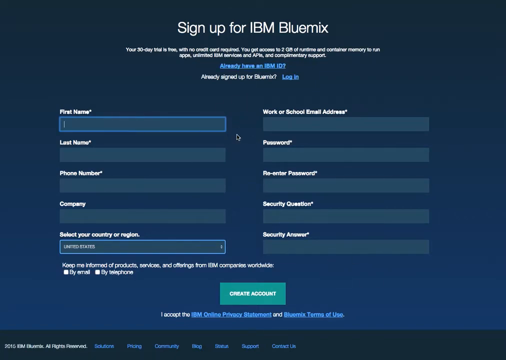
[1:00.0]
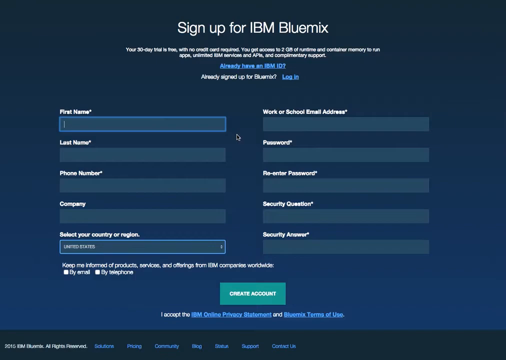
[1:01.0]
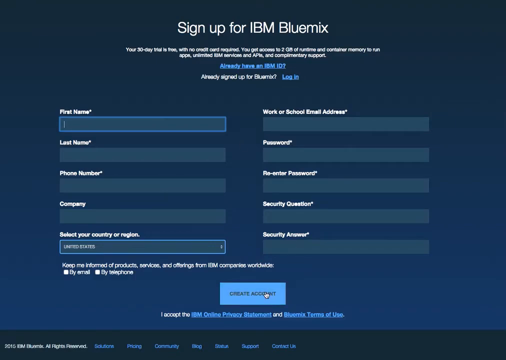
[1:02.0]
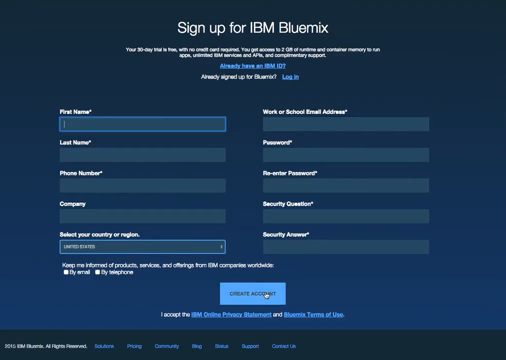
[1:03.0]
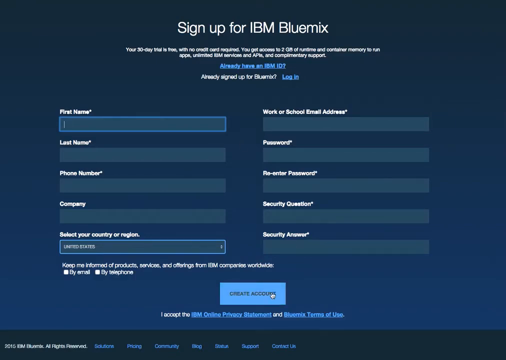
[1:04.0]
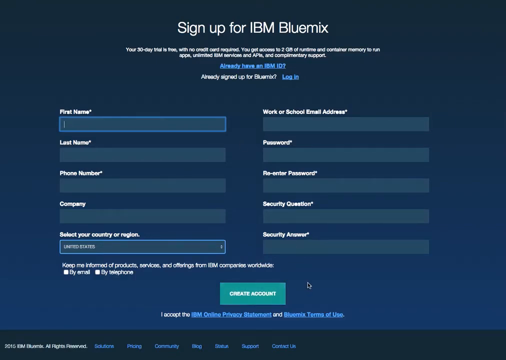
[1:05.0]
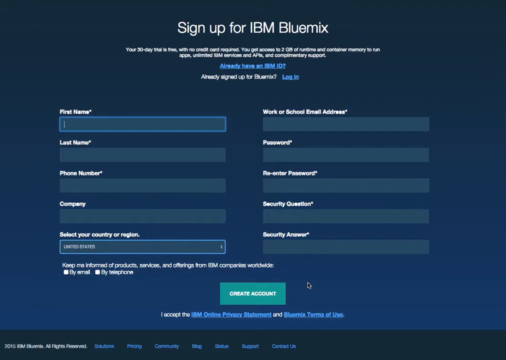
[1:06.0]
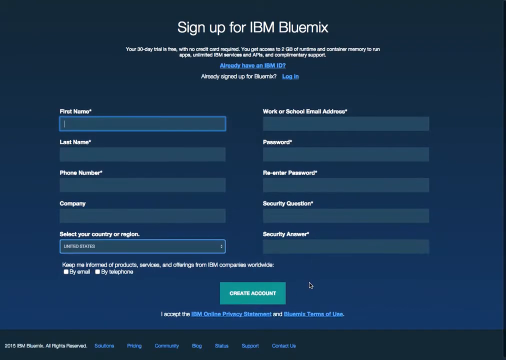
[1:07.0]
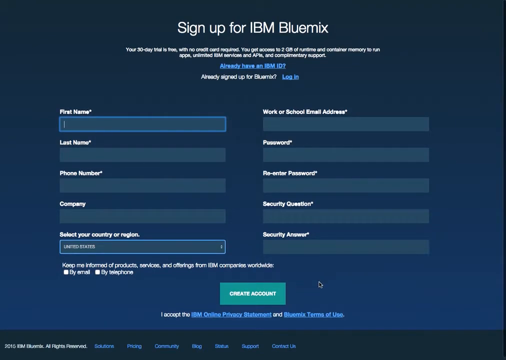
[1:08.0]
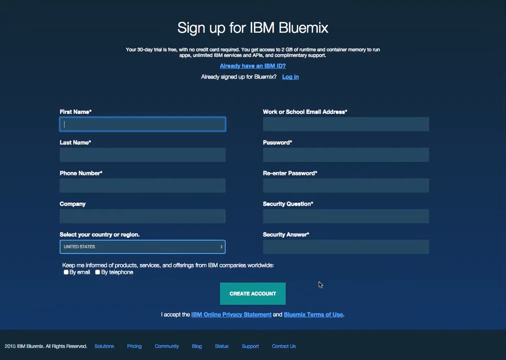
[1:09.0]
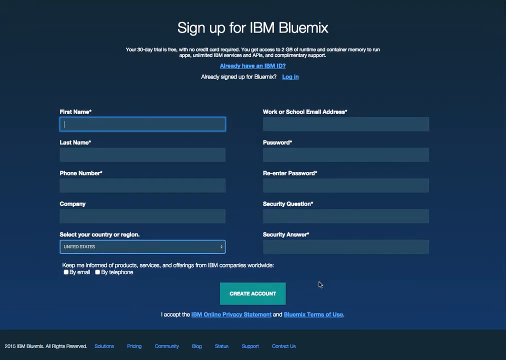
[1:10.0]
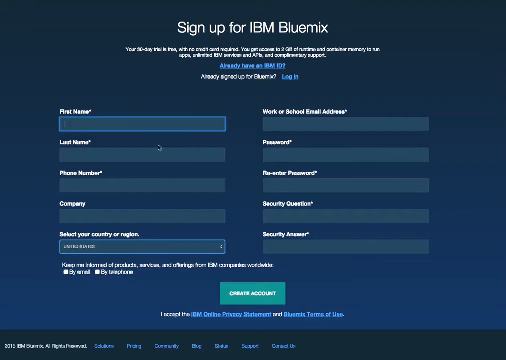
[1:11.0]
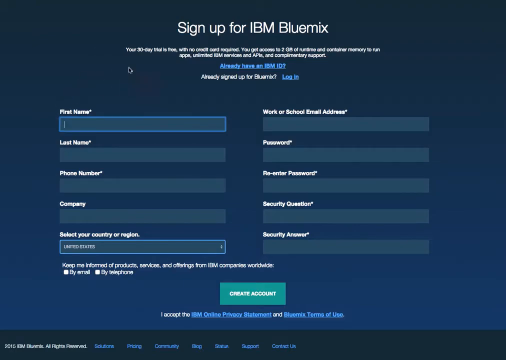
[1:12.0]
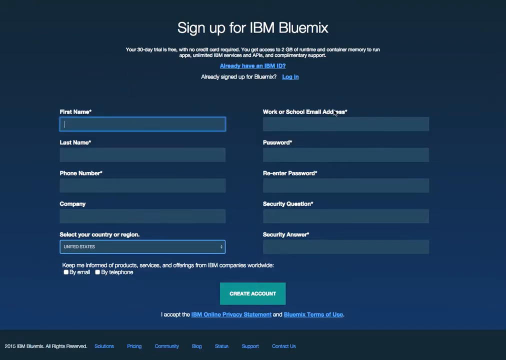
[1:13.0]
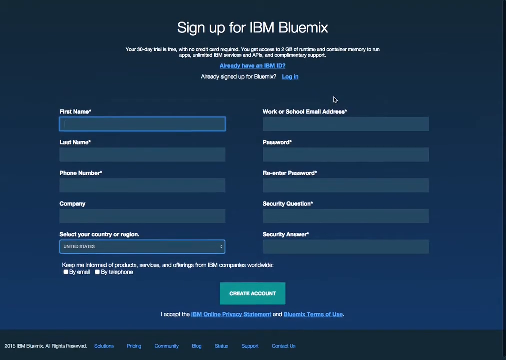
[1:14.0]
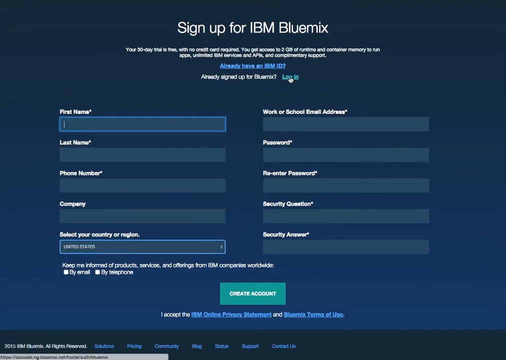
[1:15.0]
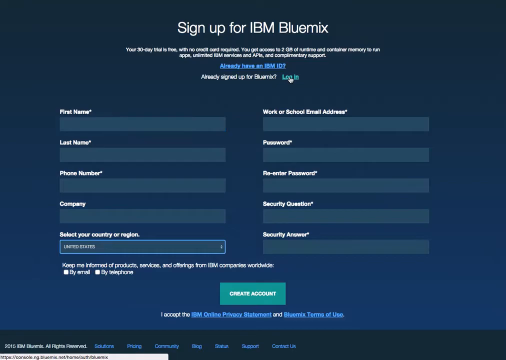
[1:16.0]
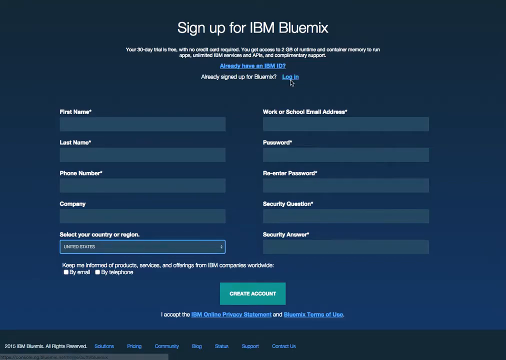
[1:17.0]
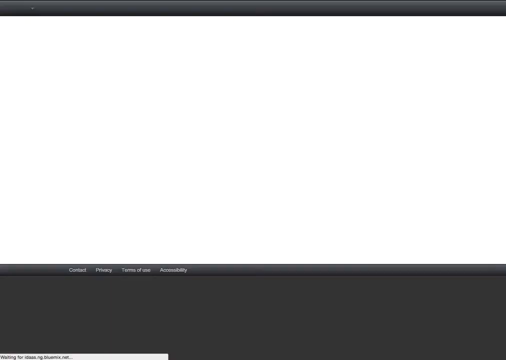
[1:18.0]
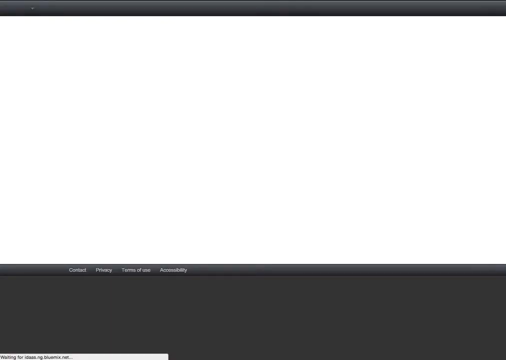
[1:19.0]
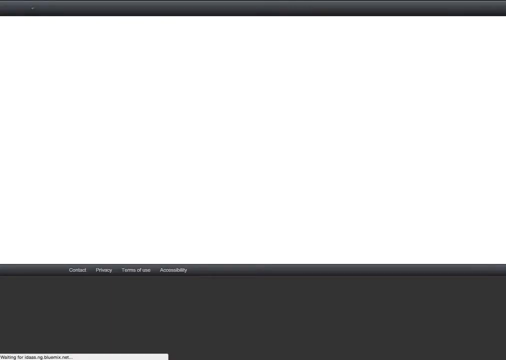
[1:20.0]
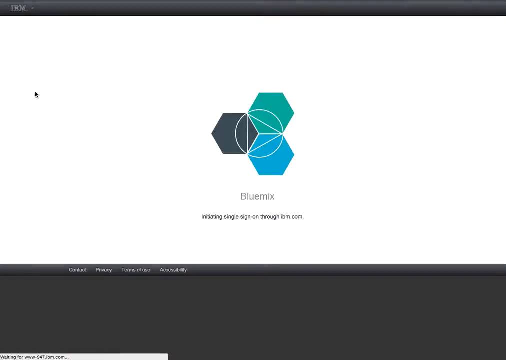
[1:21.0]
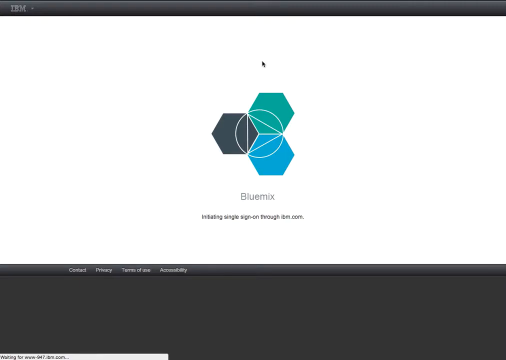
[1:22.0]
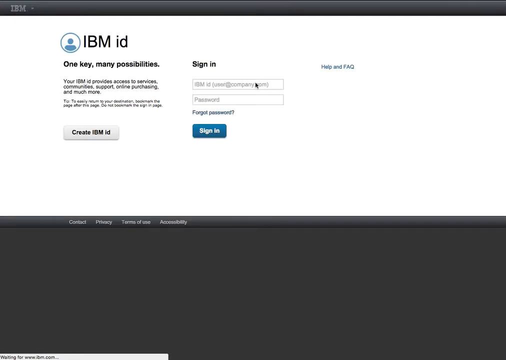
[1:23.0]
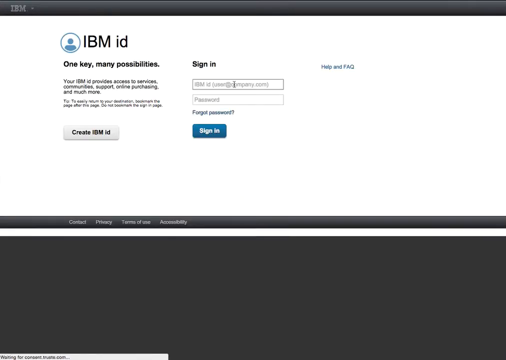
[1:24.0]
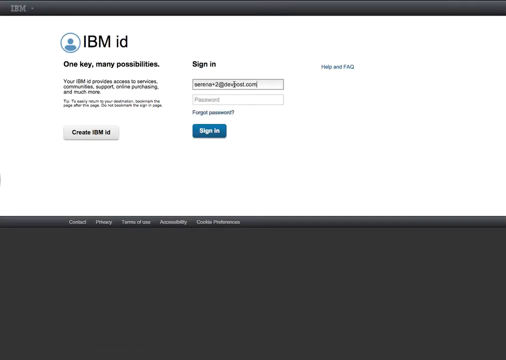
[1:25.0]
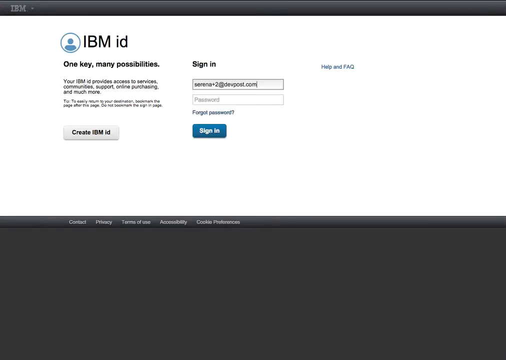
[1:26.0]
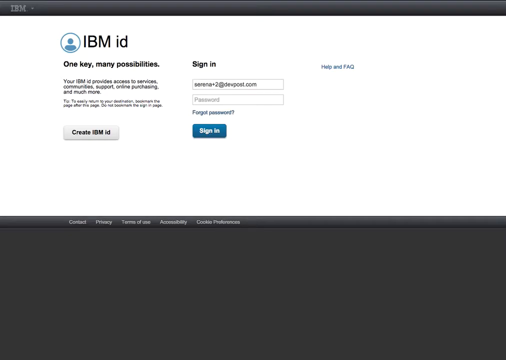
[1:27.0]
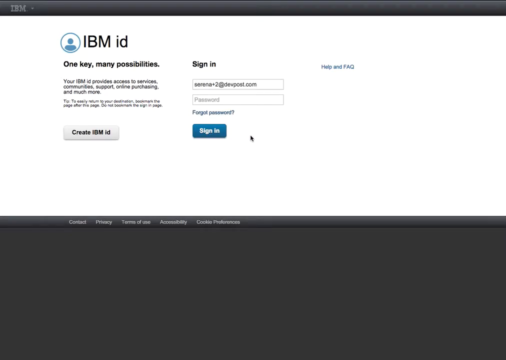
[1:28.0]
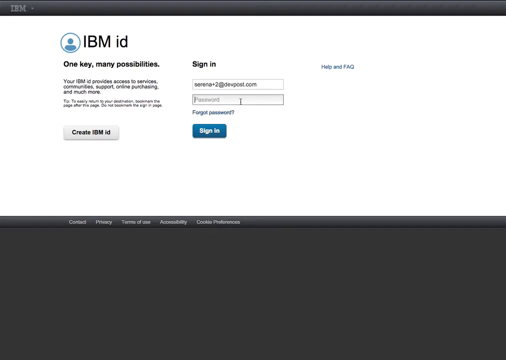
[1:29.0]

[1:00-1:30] A website page to sign up for an IBM Blue Mix shows multiple text input fields. On the left side, from the top, are the first name, last name, phone number and company input fields, and the last section on the left says "select your country or region". Along the right side, from the top, are work or email address, password, re-enter password, then security question, and below it security answer. The mouse pointer is over the create account button. The pointer then sways to the right, and as it does it changes from the hand symbol it showed on the create account button to the black pointer symbol, and the create account button turns green. The pointer then goes to the upper left.